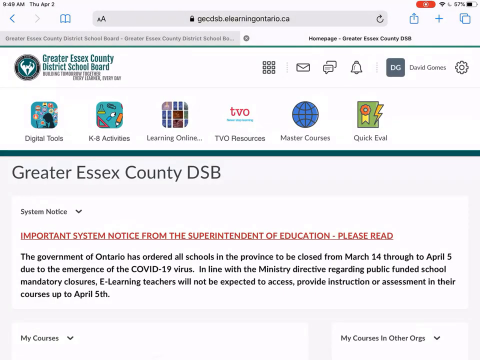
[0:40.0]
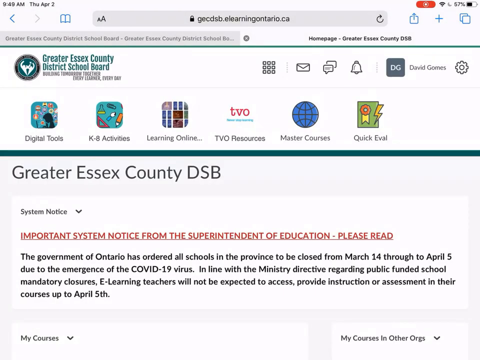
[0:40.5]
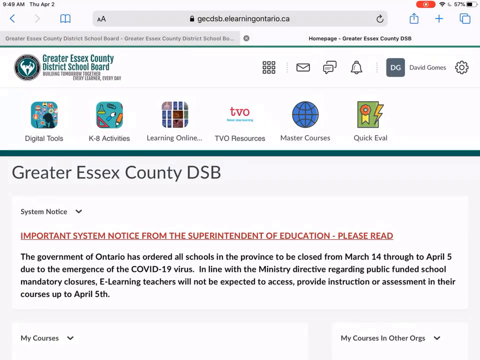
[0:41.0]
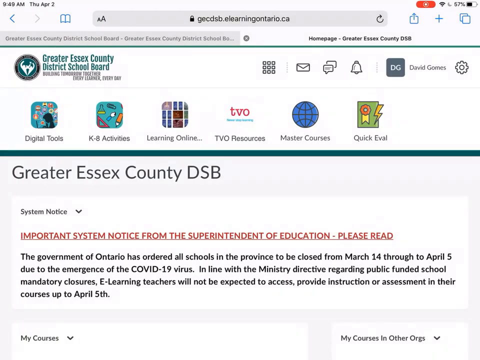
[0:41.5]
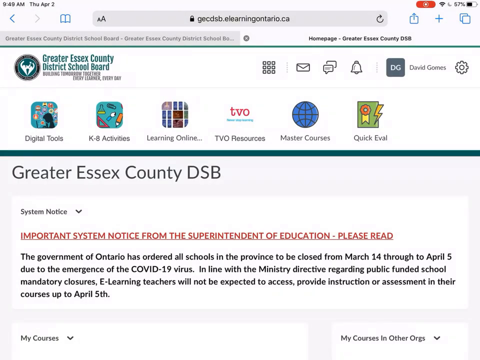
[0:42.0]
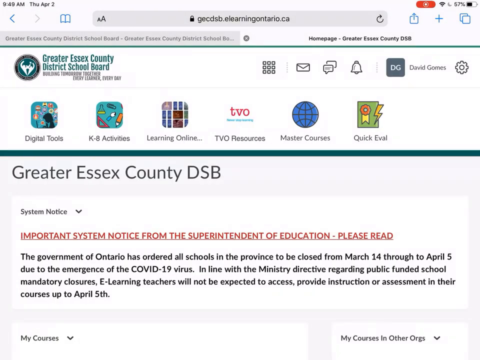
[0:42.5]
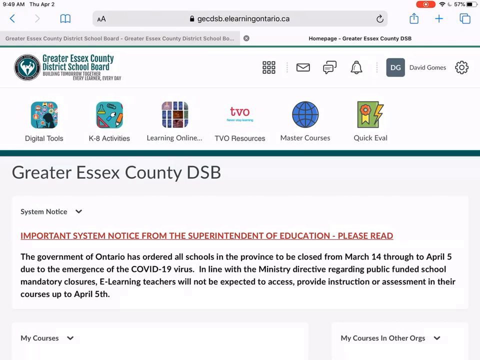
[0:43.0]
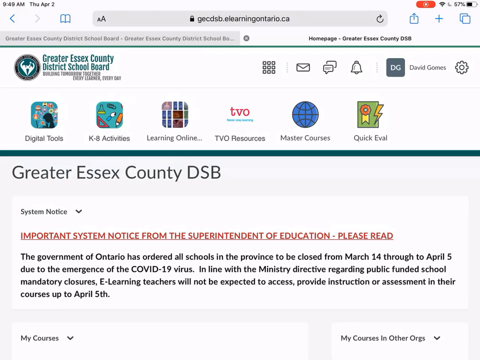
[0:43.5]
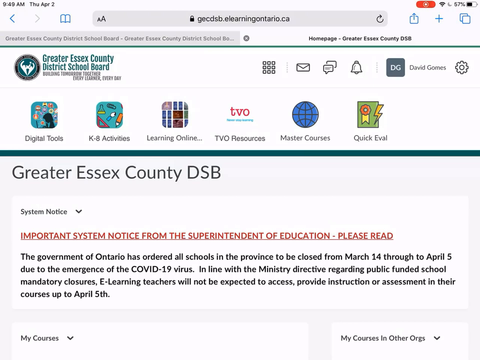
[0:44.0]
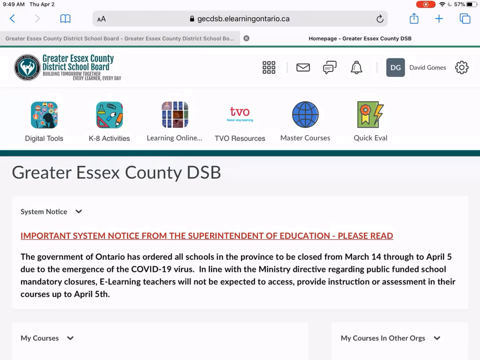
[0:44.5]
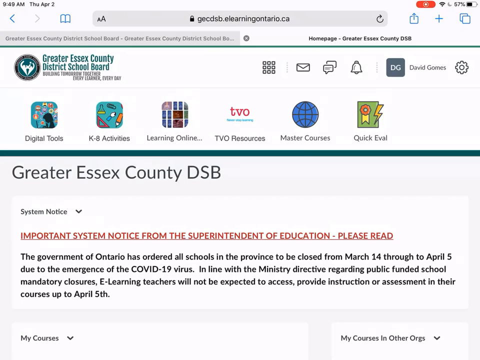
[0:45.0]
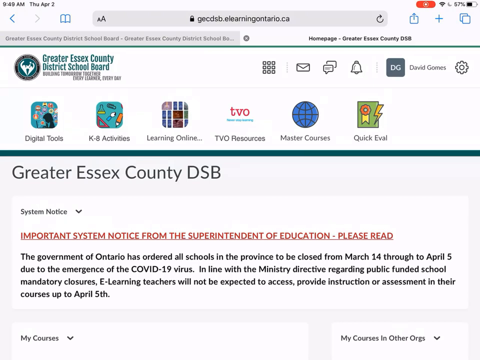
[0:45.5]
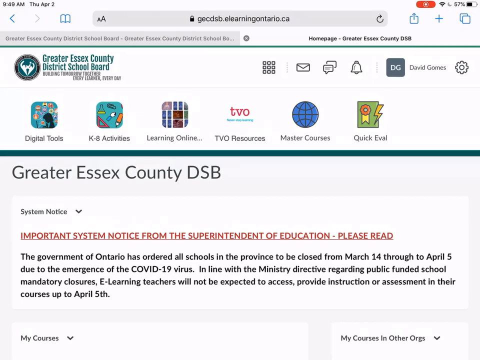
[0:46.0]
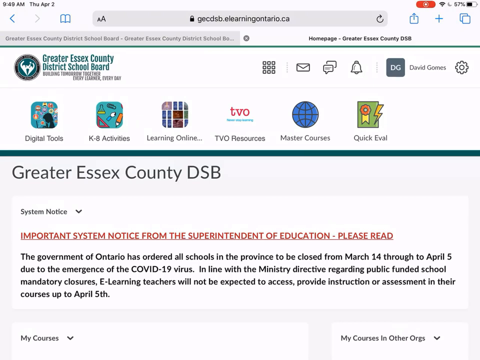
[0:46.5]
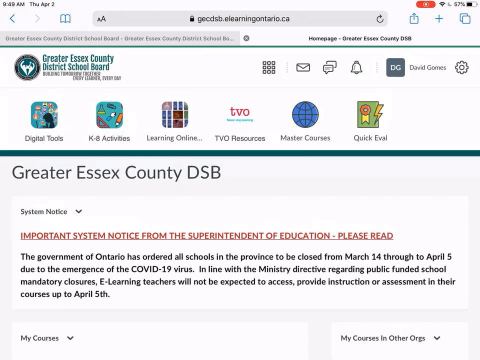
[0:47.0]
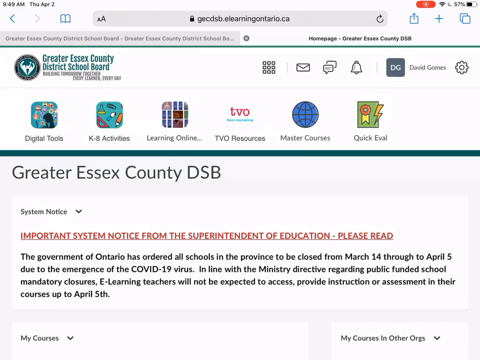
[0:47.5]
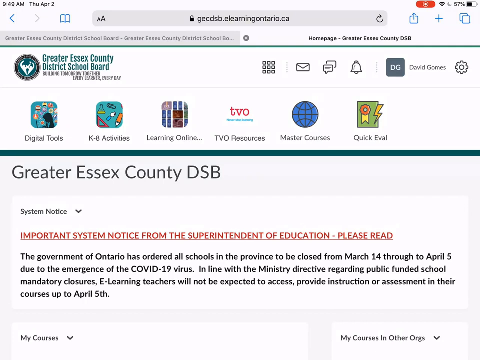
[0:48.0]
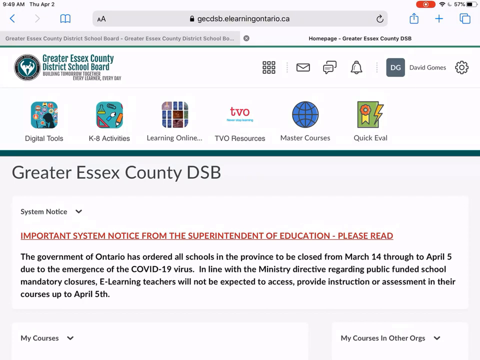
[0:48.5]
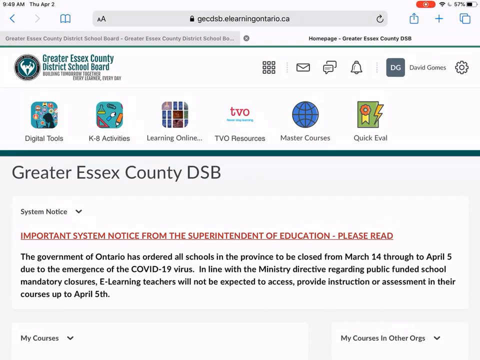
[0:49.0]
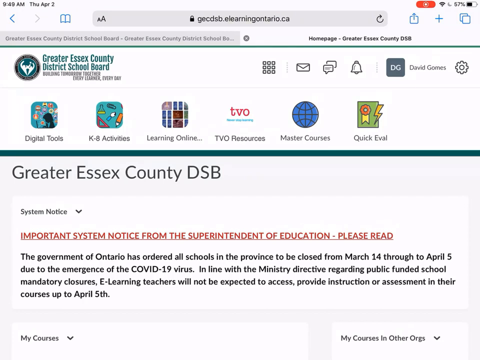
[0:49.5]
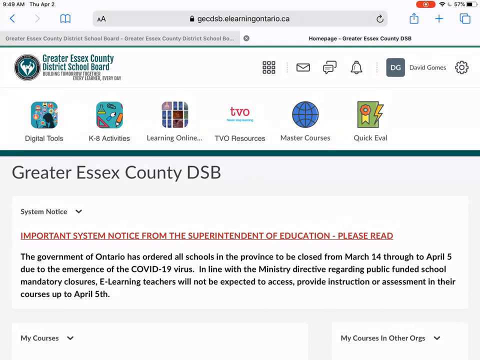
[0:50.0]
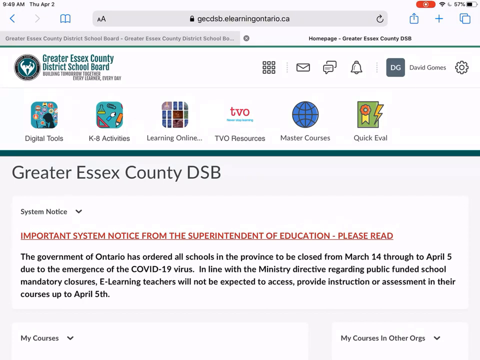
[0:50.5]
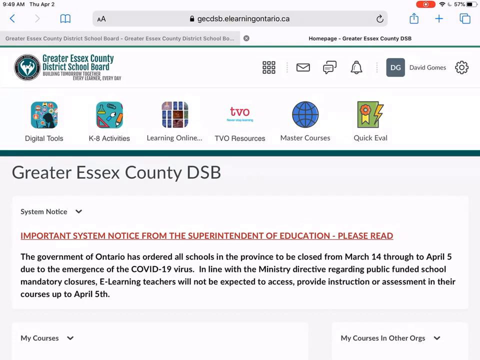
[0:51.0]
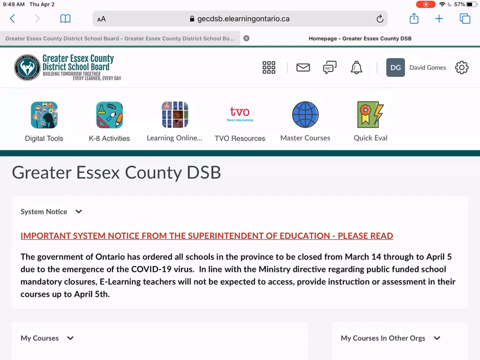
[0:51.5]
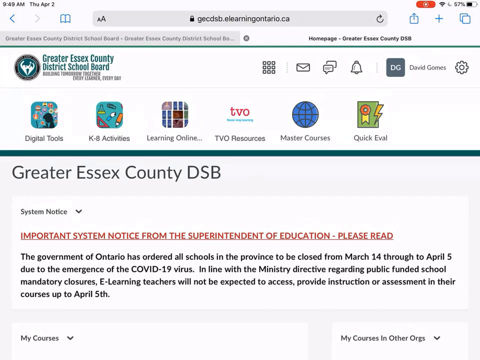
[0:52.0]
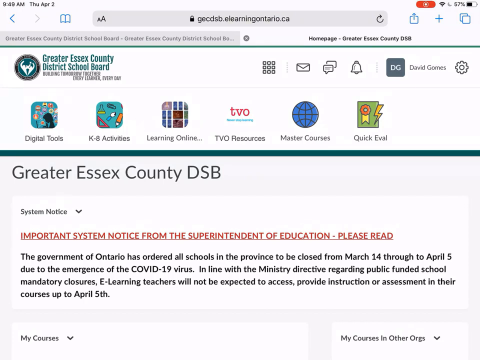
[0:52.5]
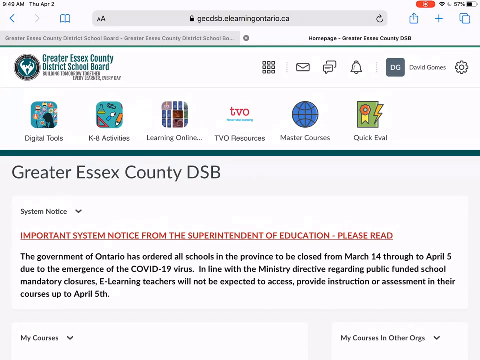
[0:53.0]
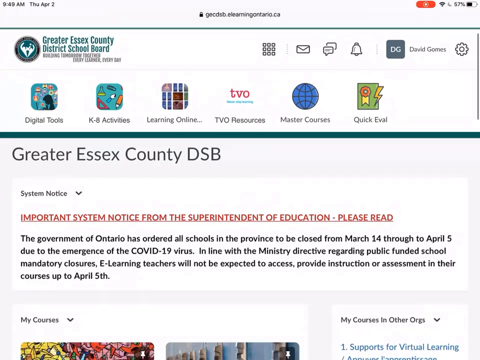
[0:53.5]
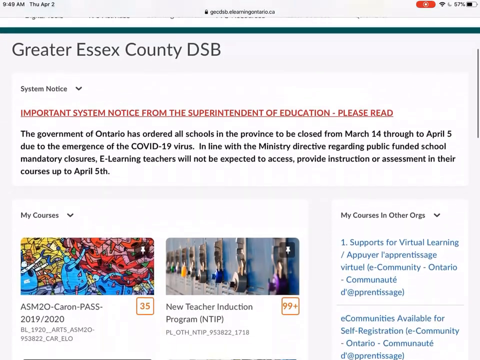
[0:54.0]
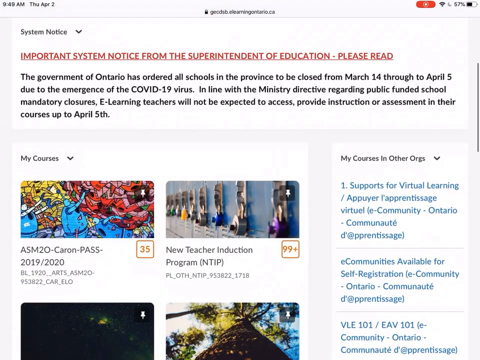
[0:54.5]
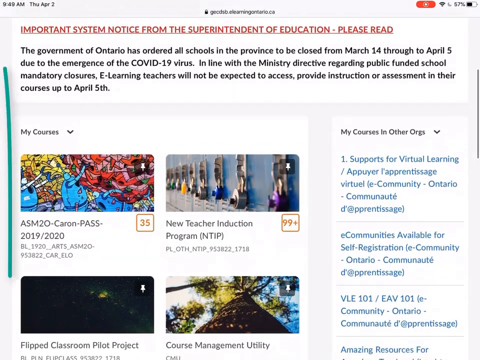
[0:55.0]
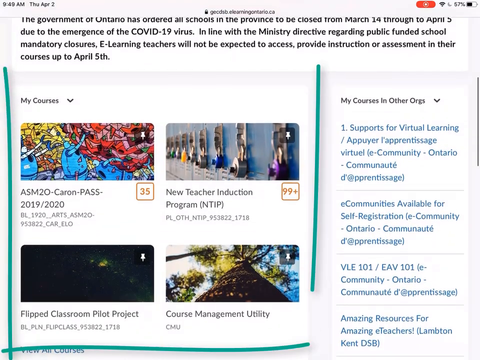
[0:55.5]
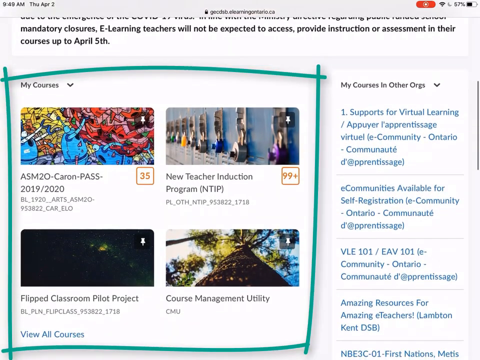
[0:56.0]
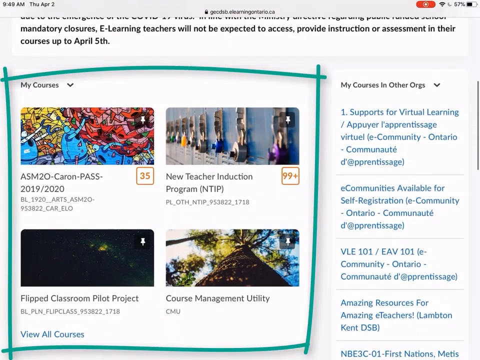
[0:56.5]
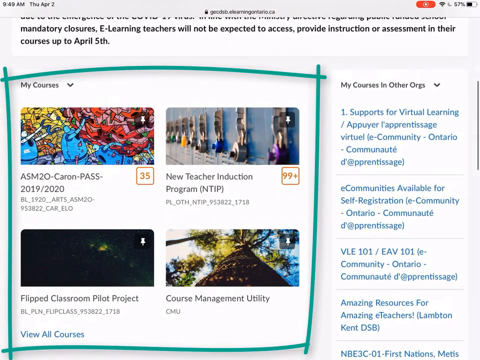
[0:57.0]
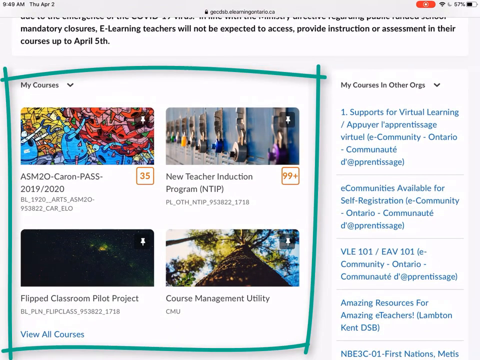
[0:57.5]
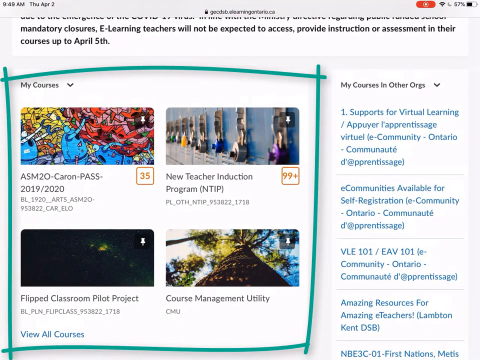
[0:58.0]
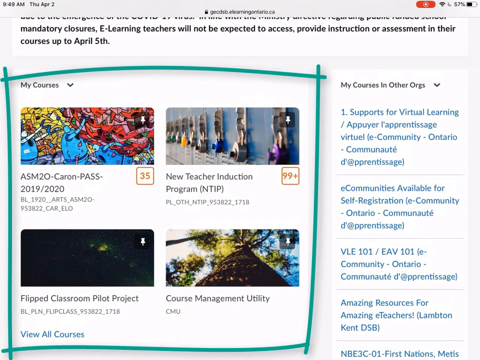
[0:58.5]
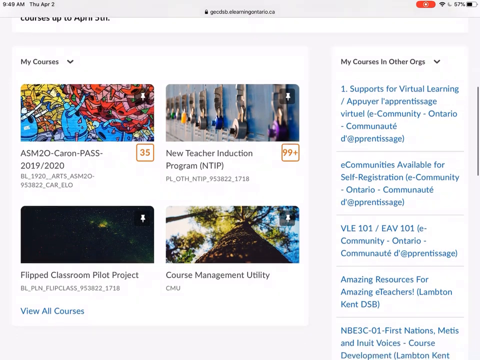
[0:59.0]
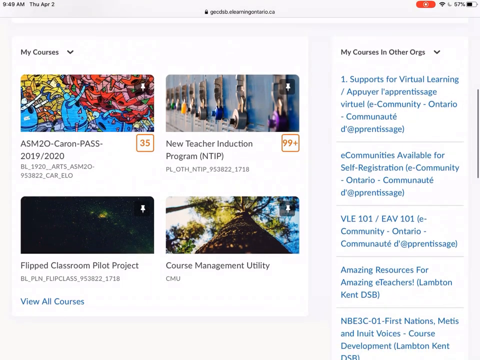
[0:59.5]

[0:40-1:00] A banner runs across the top of the web page, reading "Greater Essex County District School Board" in green in the upper left. Next to that are icons for mailing, texting and alerts. Below are six tabs: "digital tools," "K-8 activities," "learning online," "TVO resources," "master courses," and "quick e-mail." About a third of the way down the page is the headline "Greater Essex County DSB system notice." In red it reads "important system notice from the superintendent of education, please read." Below that, a paragraph in black reads "the government of Ontario has ordered all schools in the province to be closed from March 14th through to April 5th, due to the emergence of the COVID-19 virus." The person looking at the page then scrolls down. On the left-hand side is a tab reading "my courses" with a drop-down menu arrow, with four blocks underneath it, and a green marker draws a square around them. The four rectangular images have class names below them, including "new teacher induction program," "the flipped classroom pilot project," and "course management utility."